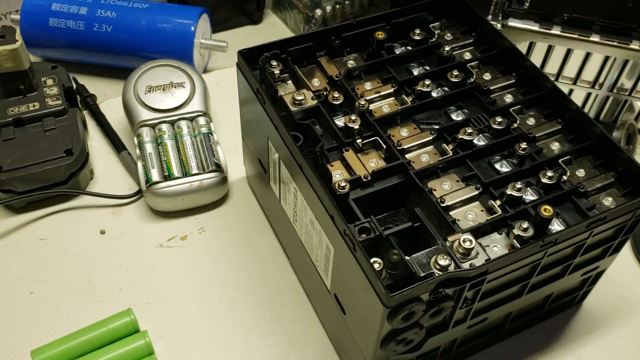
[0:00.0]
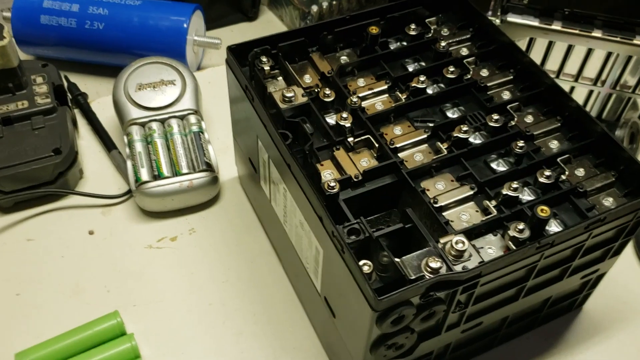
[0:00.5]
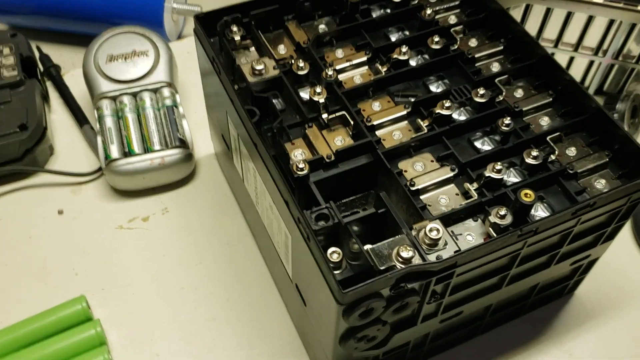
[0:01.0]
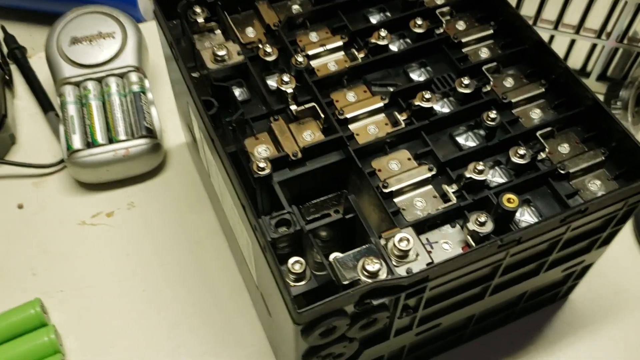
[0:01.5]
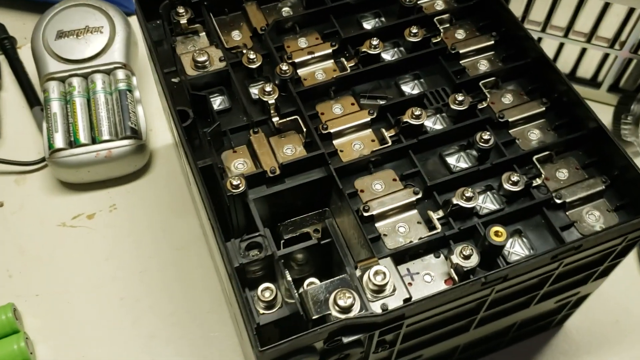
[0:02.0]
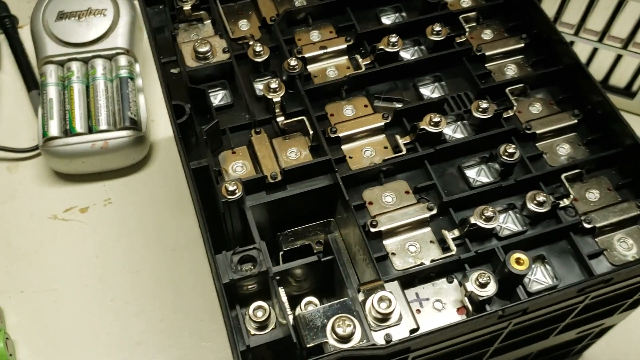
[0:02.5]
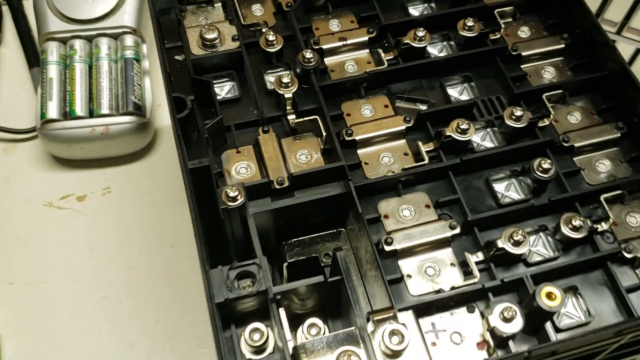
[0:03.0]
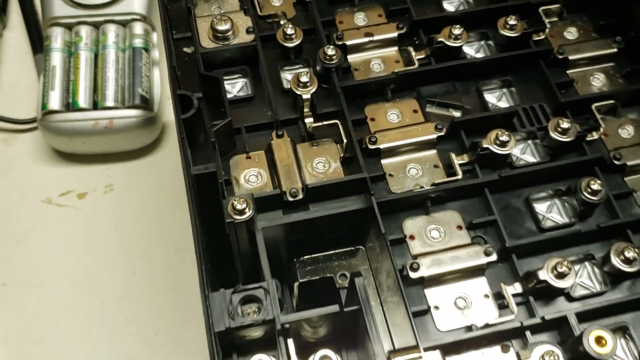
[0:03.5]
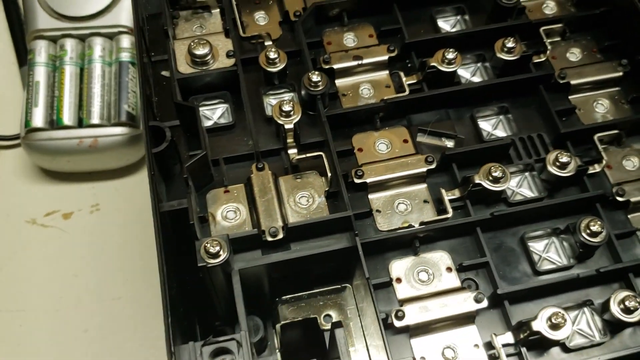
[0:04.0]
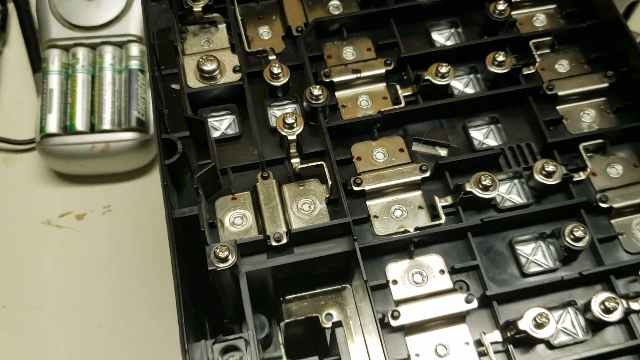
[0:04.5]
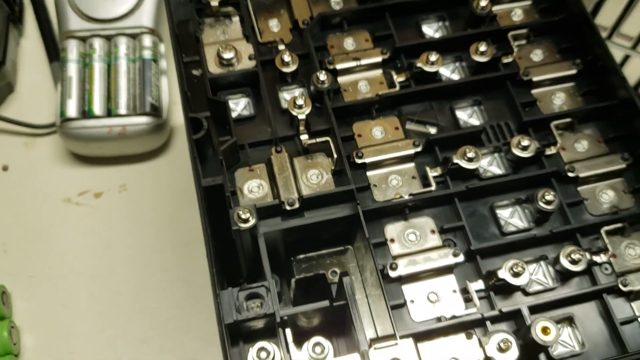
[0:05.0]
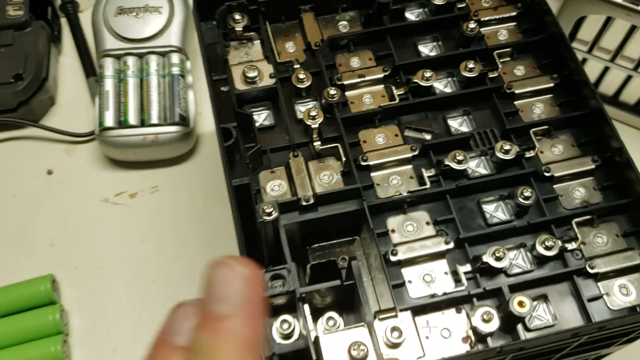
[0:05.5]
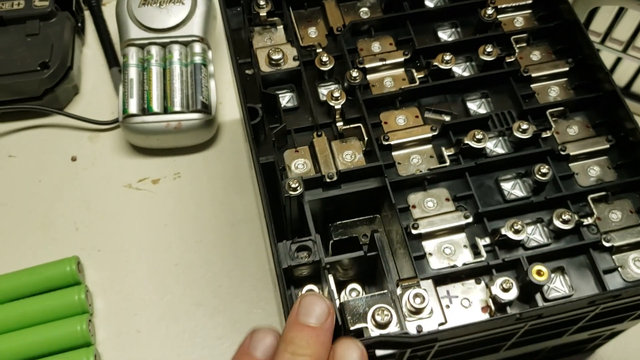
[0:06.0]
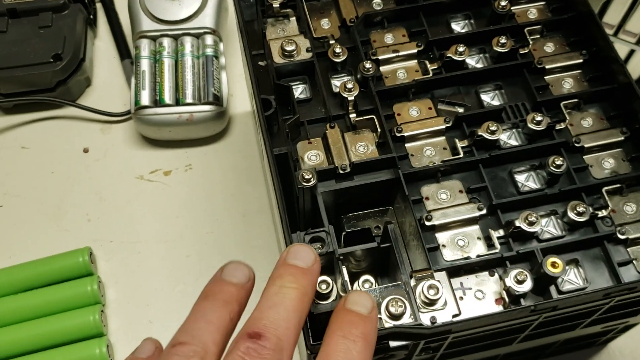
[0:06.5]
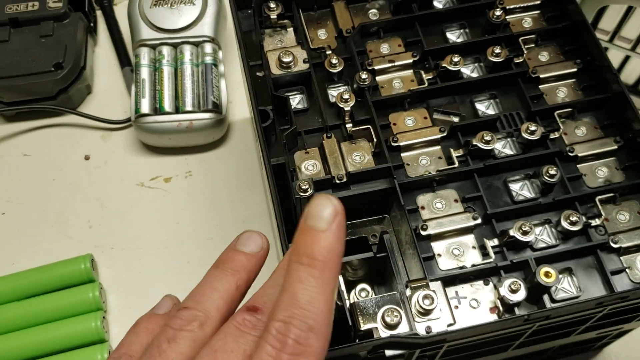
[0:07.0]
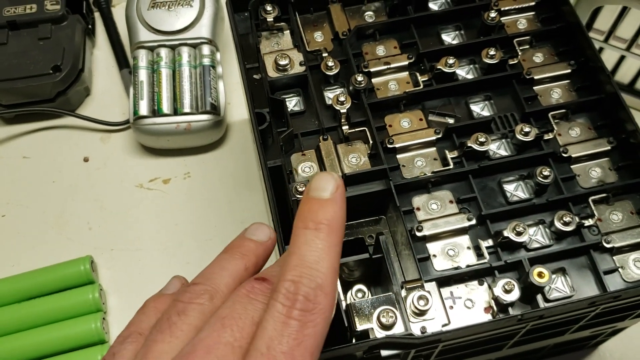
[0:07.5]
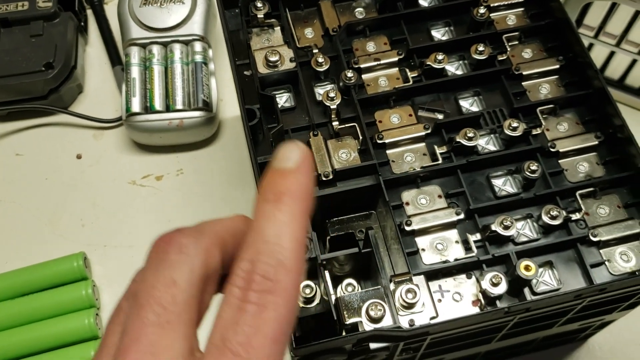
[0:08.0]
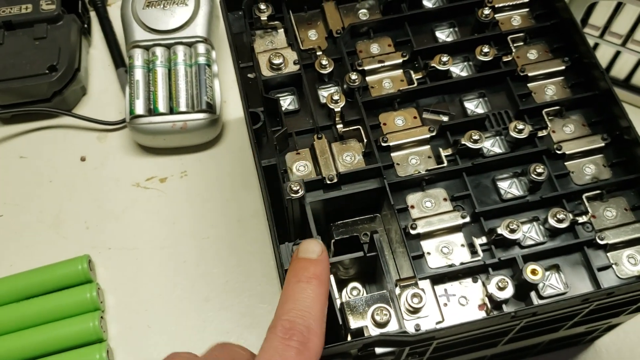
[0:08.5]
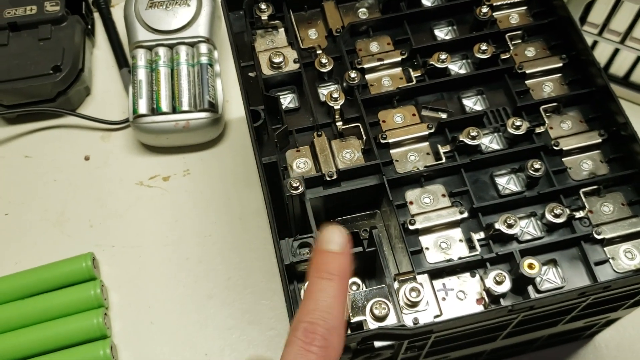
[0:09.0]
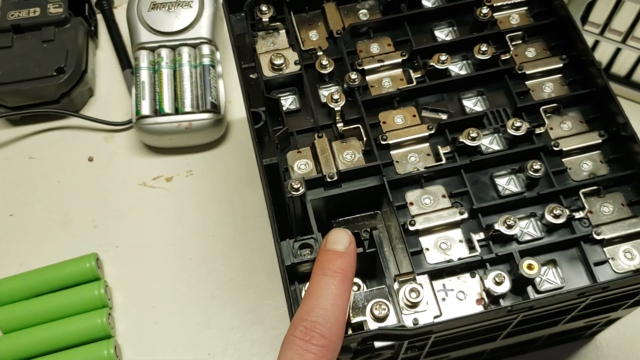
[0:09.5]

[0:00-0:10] A close-up shows what appears to be some kind of electrical equipment, apparently including some relays, while someone points to various items. In the background, rechargeable batteries are being charged, and there is what looks like a voltometer and some other electrical equipment. The shot is zoomed in fairly tight, so it is difficult to tell exactly what is being shown. The setting is possibly a workshop, or a workbench at home or maybe in a shed. The hand of the person pointing appears to have a few little scrapes on the knuckles.